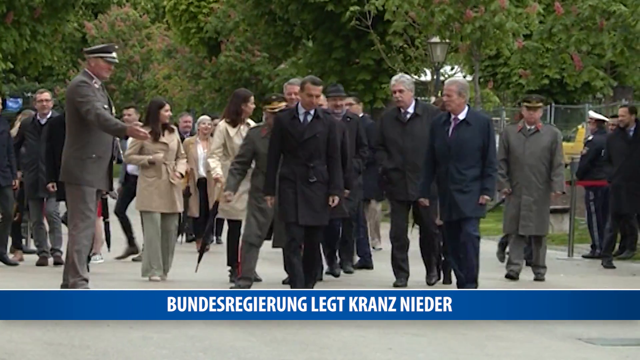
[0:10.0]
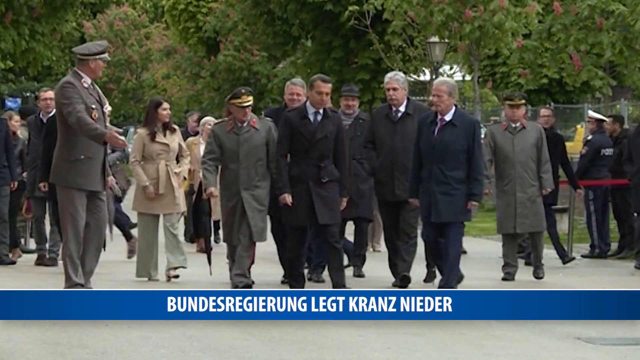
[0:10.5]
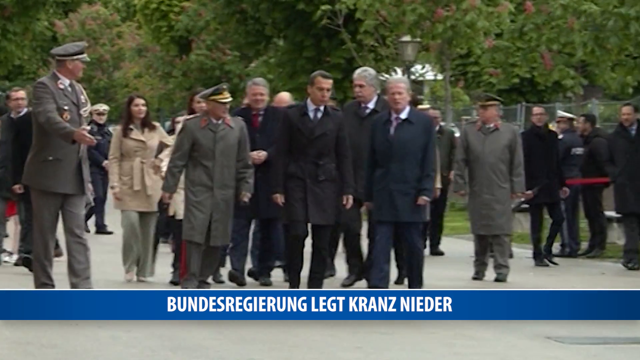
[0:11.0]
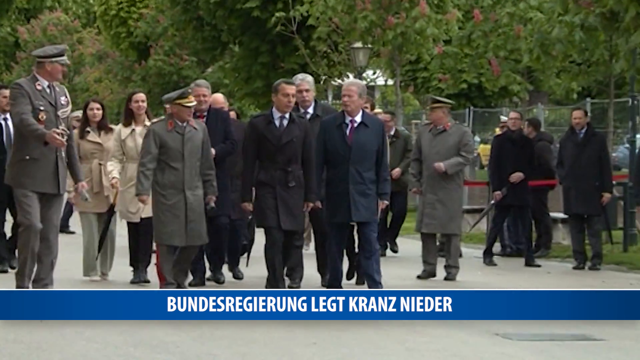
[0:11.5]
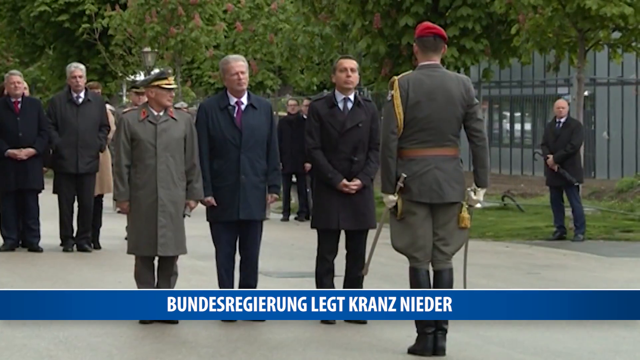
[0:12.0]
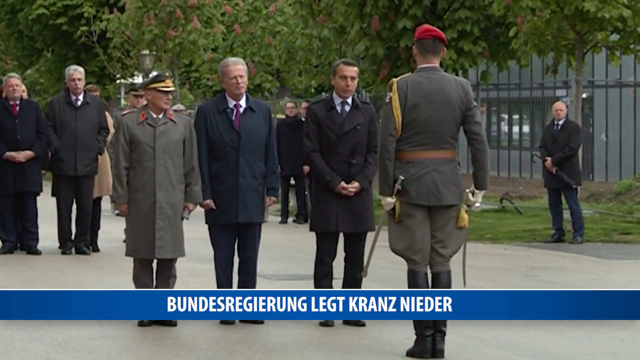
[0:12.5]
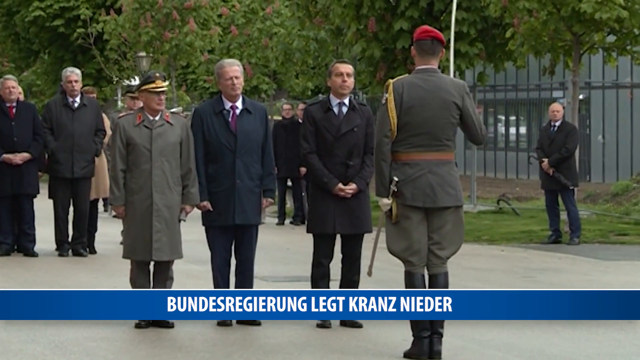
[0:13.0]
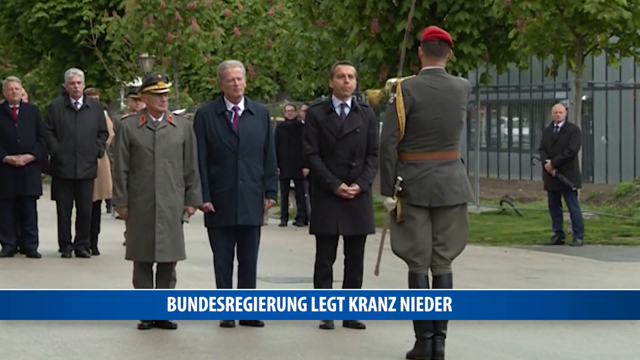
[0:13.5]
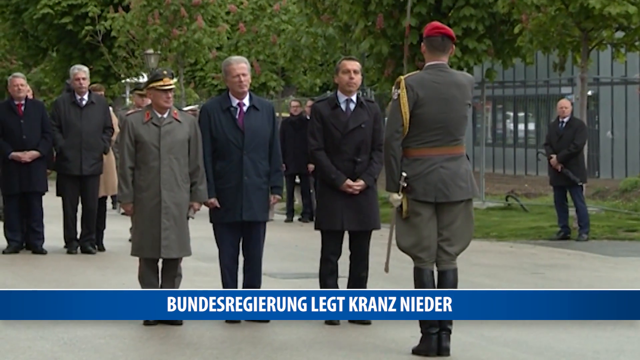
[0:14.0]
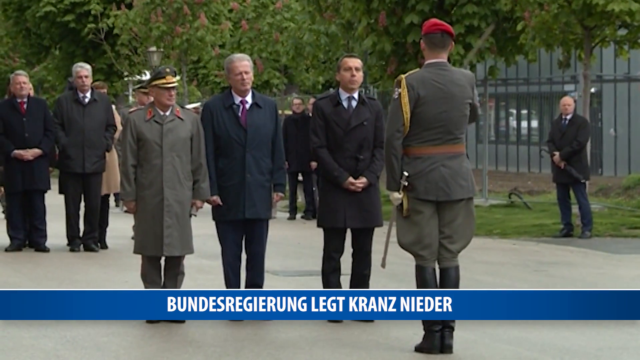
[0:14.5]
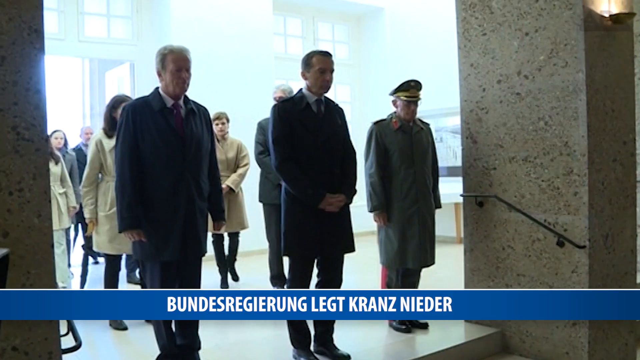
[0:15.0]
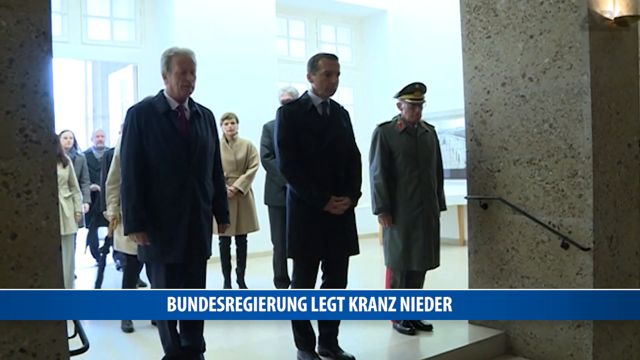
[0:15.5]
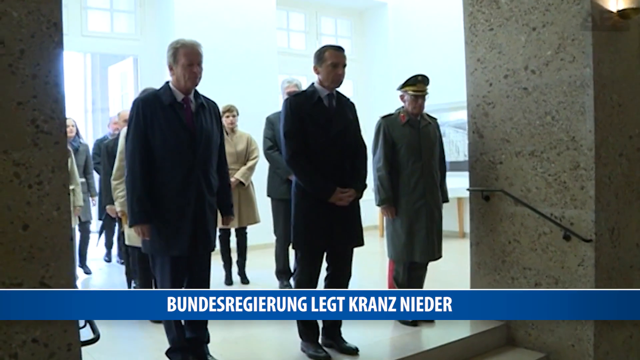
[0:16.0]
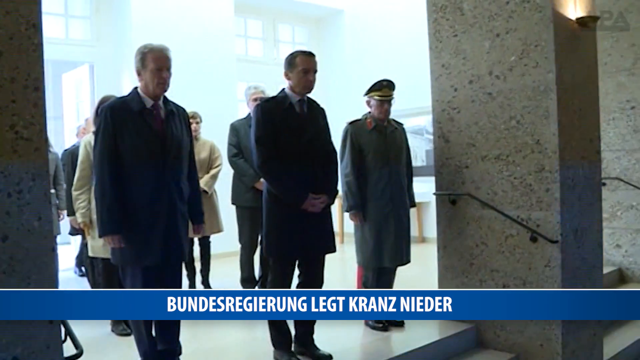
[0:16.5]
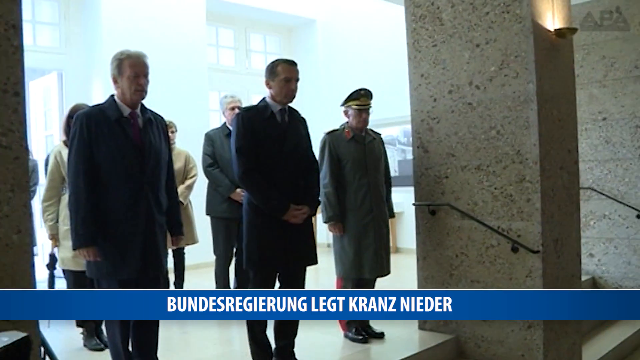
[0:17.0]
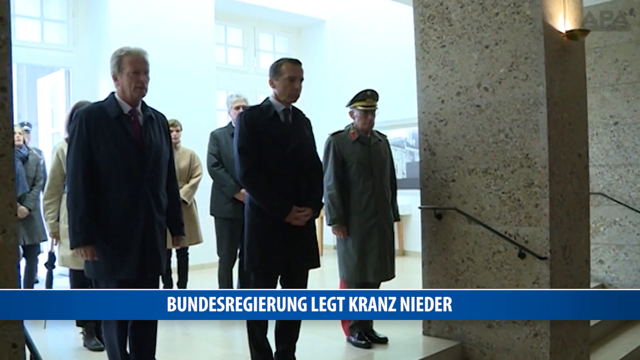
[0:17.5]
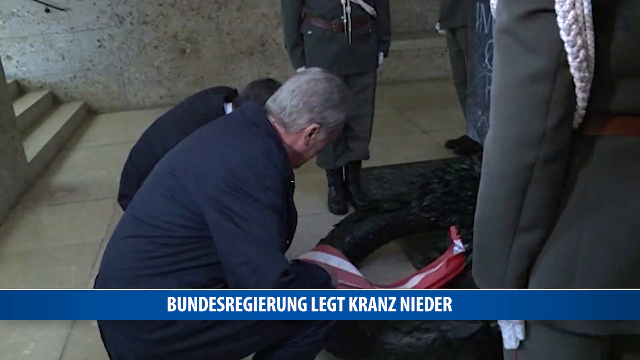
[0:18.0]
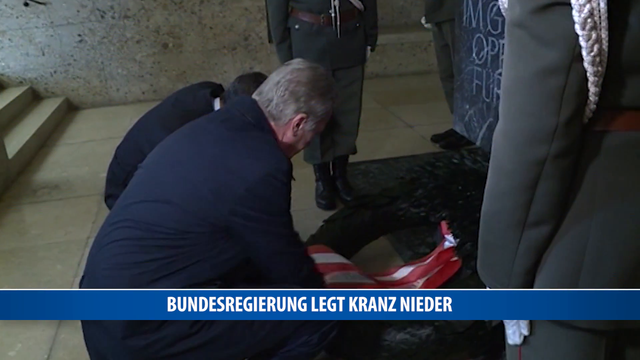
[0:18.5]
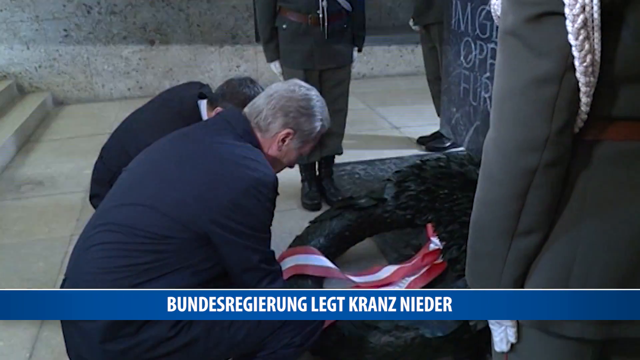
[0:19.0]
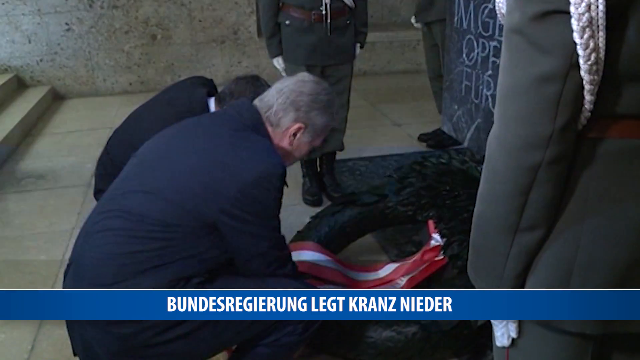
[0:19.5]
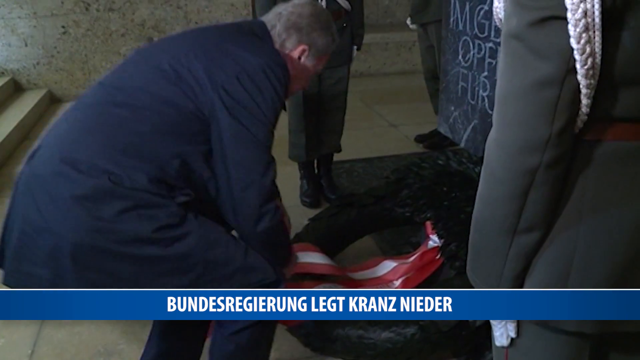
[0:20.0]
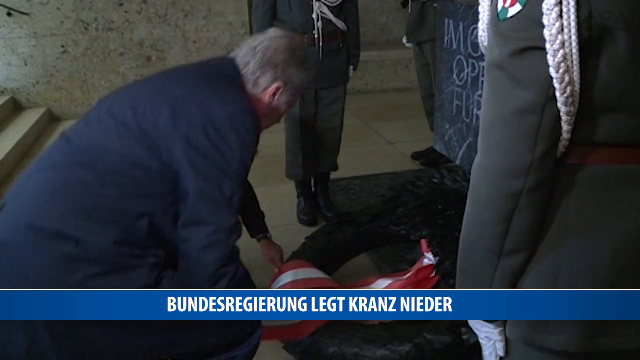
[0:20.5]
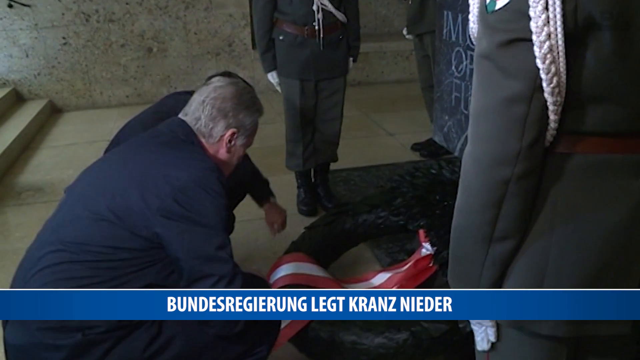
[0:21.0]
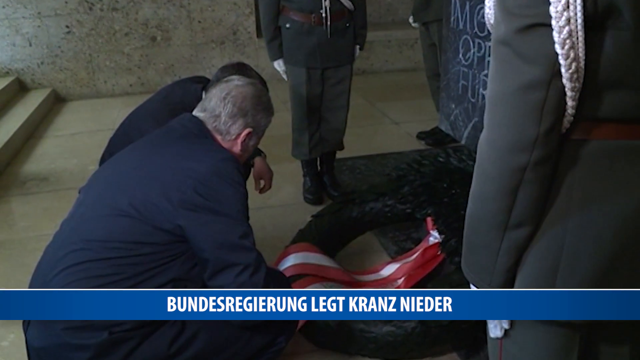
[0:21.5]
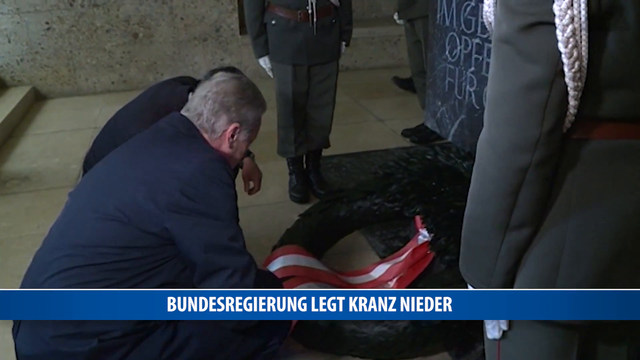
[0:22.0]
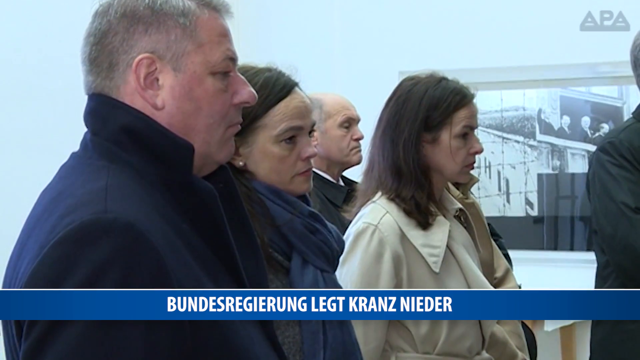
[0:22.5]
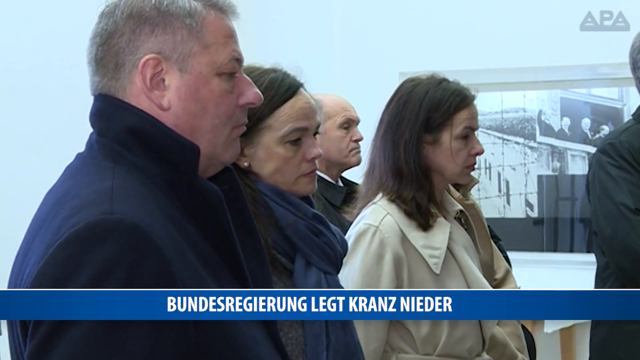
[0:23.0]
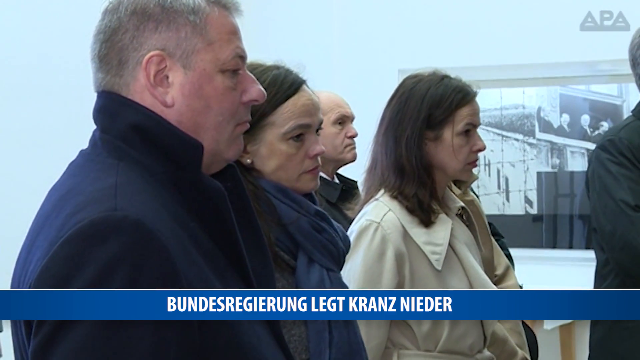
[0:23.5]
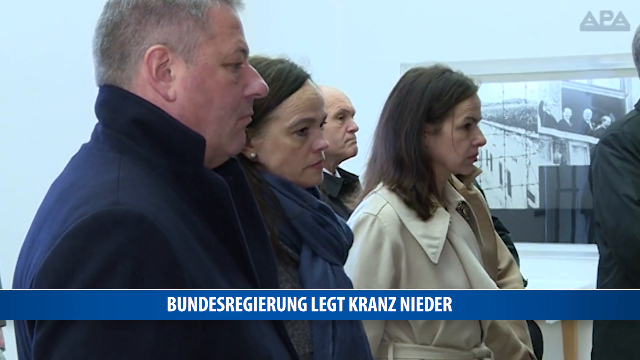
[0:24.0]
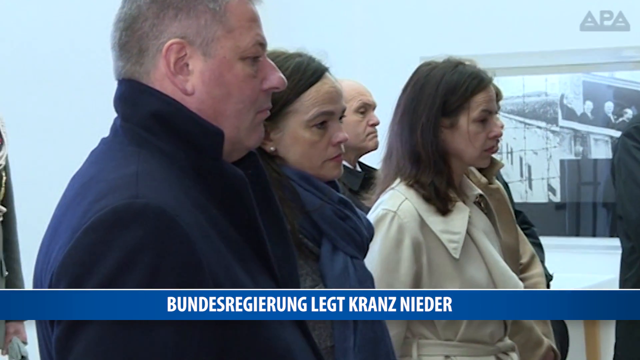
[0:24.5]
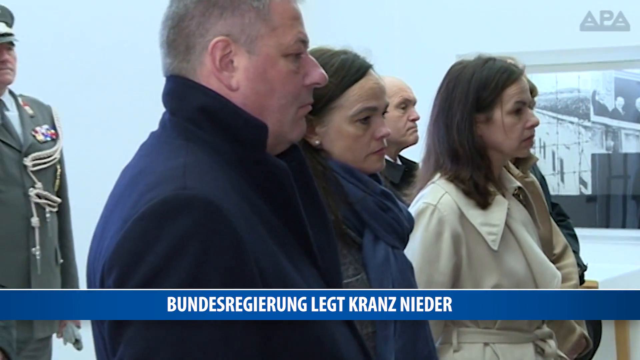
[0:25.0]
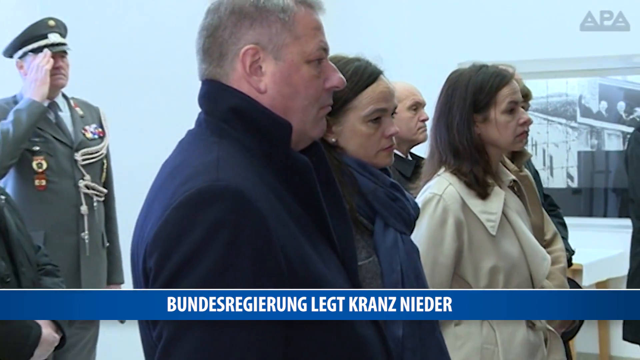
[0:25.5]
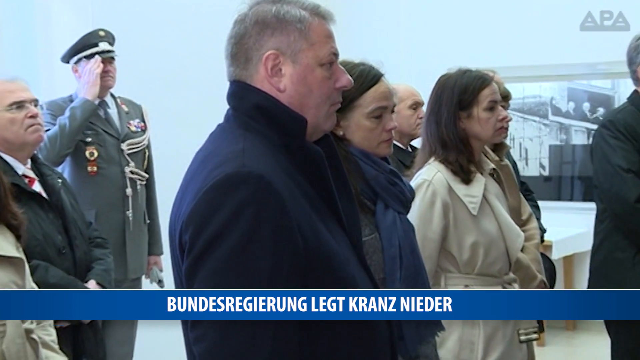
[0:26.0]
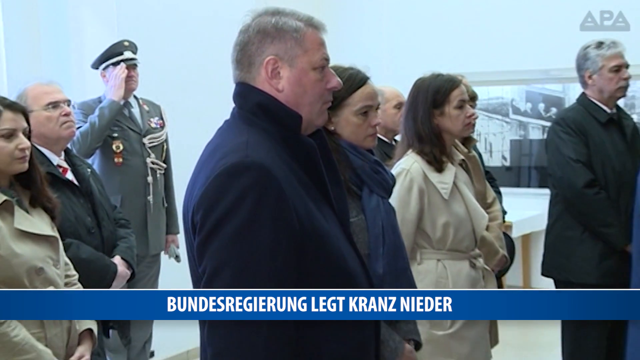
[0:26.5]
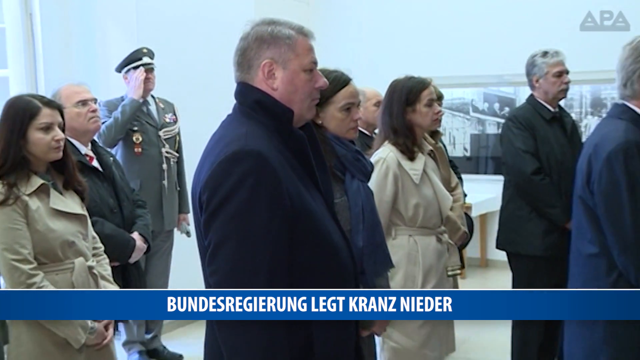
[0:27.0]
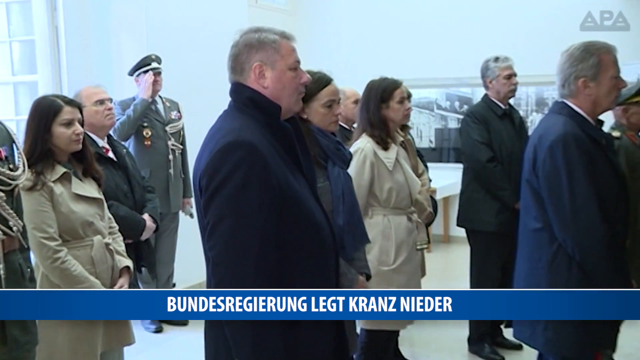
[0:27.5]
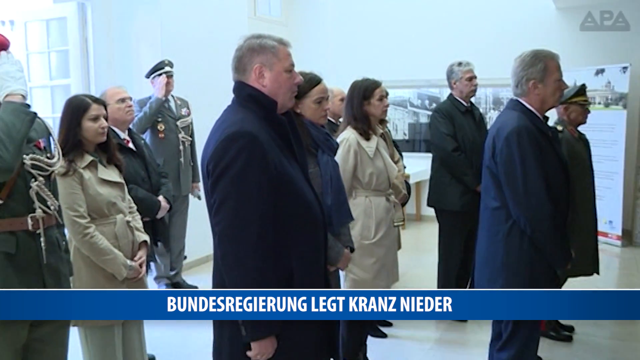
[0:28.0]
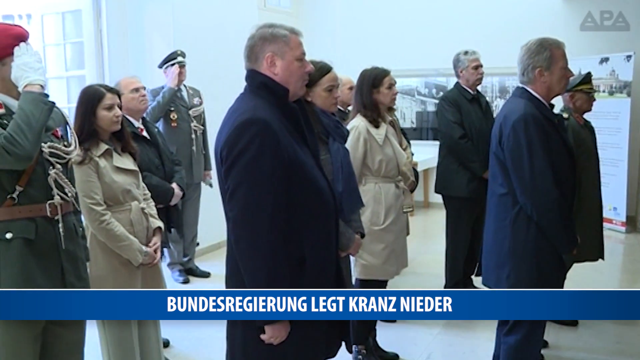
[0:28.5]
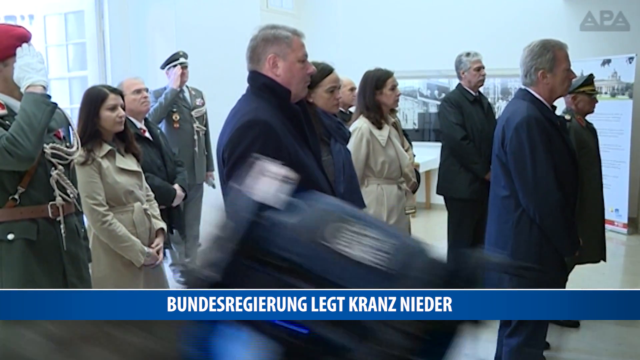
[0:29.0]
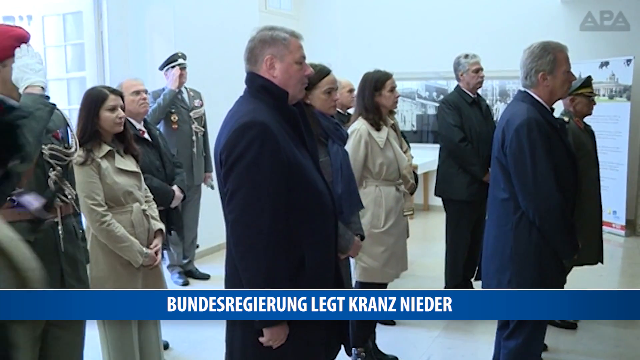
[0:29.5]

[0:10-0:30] On-screen text at the top of the news footage, a subtopic, begins "federal government lays". Soldiers take part in the event, and the officials are saluted in a ceremonial context. All the soldiers march in unison.